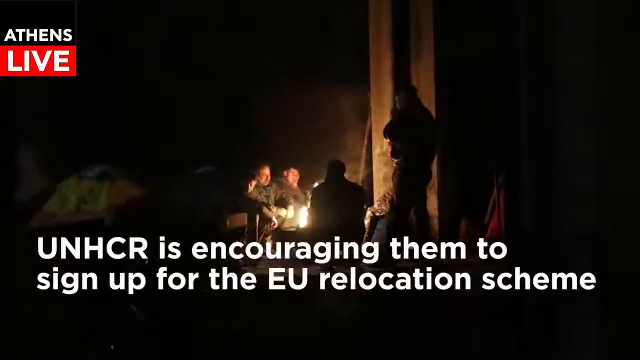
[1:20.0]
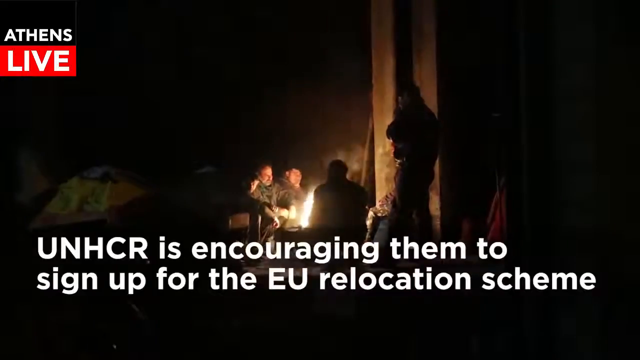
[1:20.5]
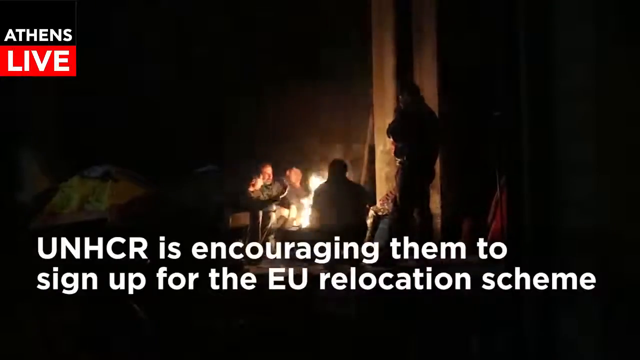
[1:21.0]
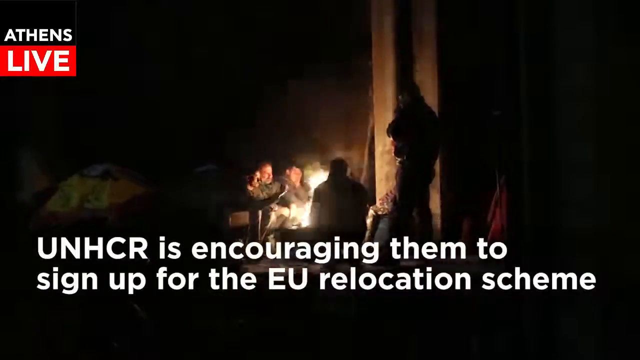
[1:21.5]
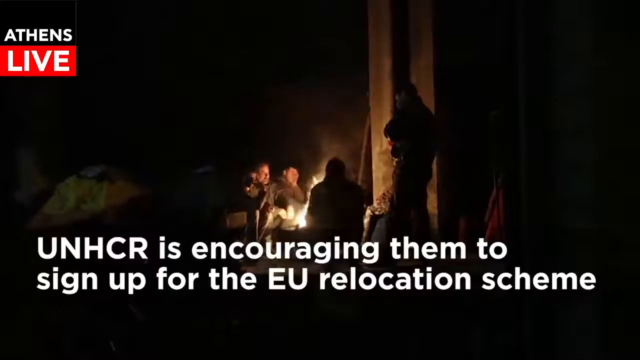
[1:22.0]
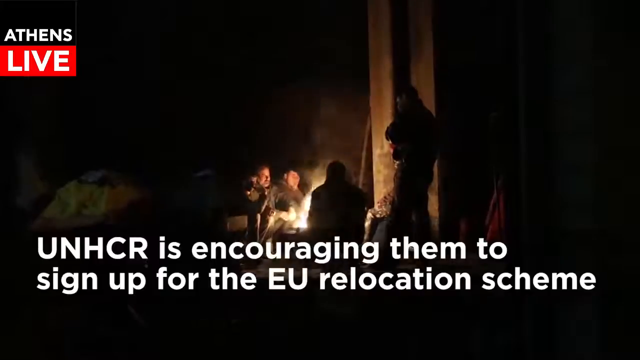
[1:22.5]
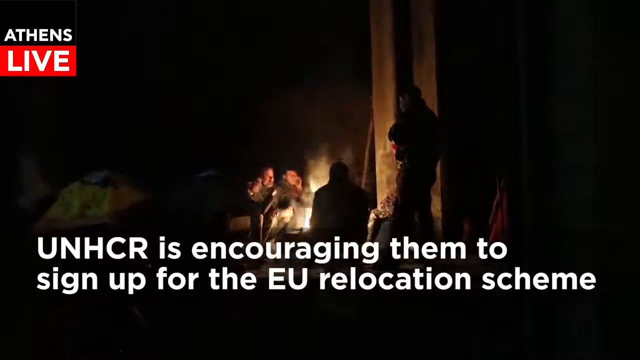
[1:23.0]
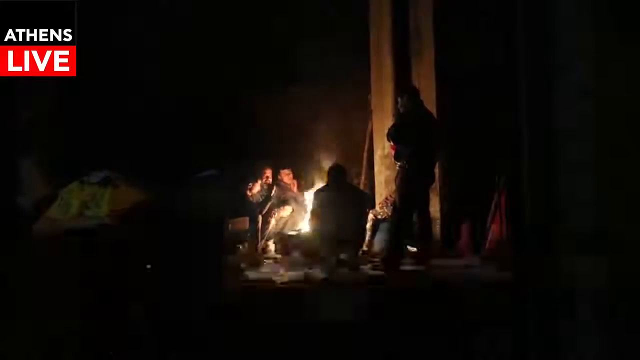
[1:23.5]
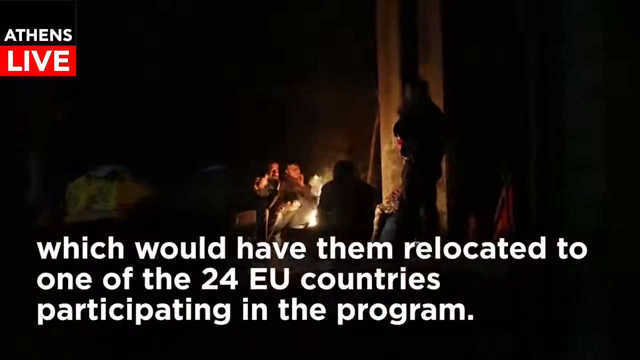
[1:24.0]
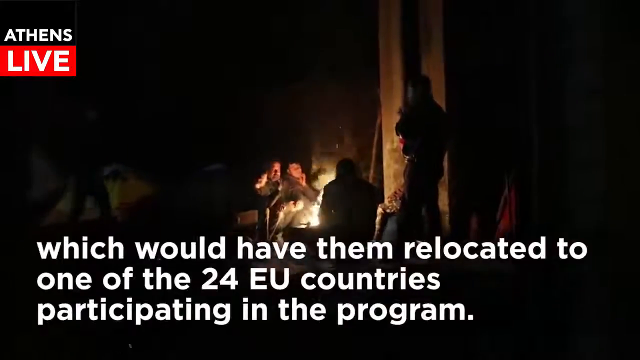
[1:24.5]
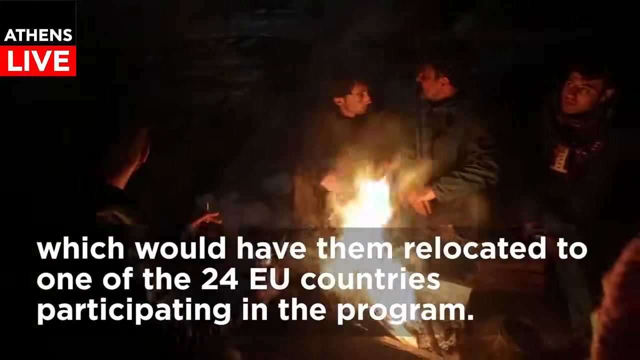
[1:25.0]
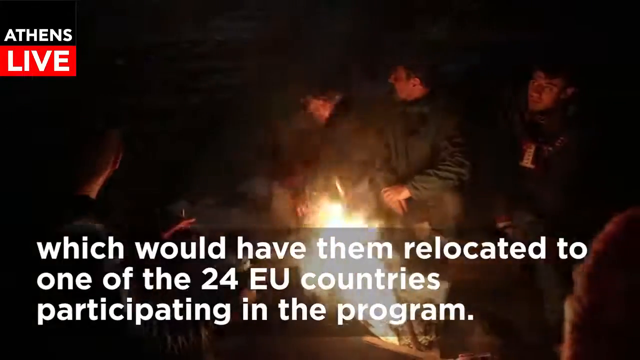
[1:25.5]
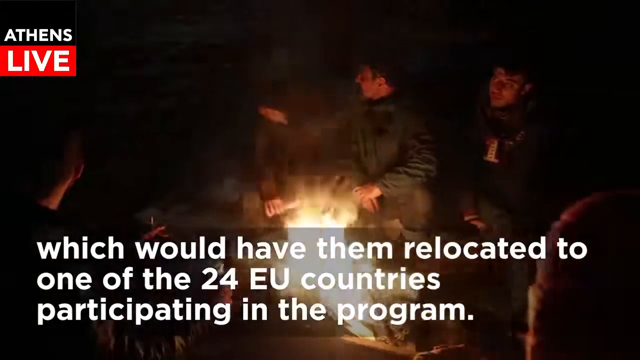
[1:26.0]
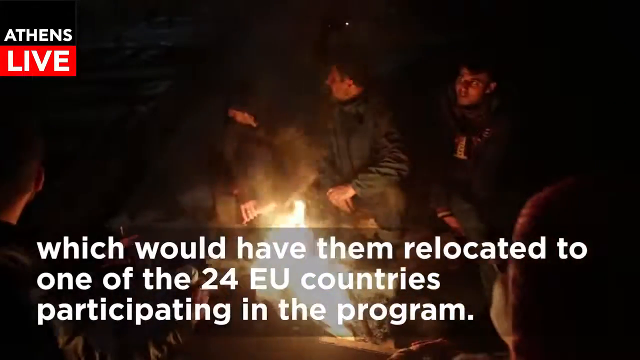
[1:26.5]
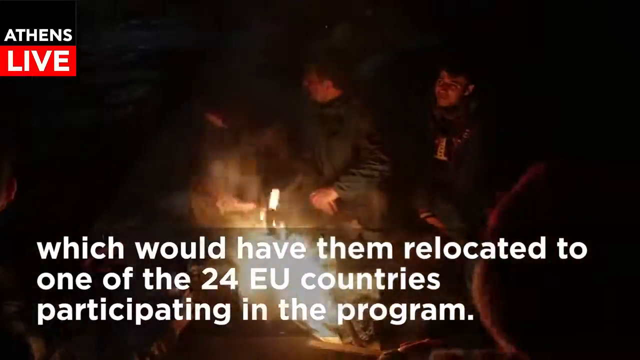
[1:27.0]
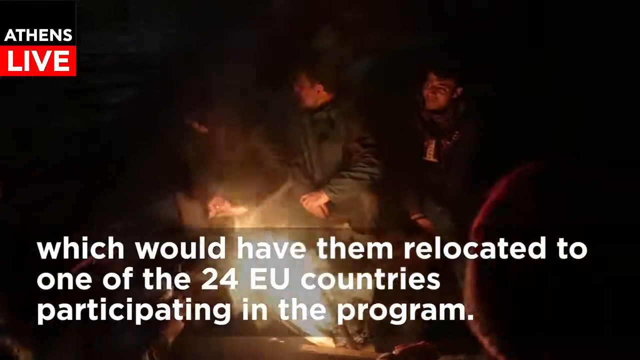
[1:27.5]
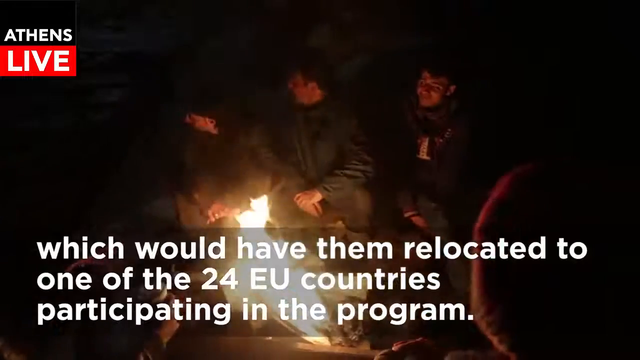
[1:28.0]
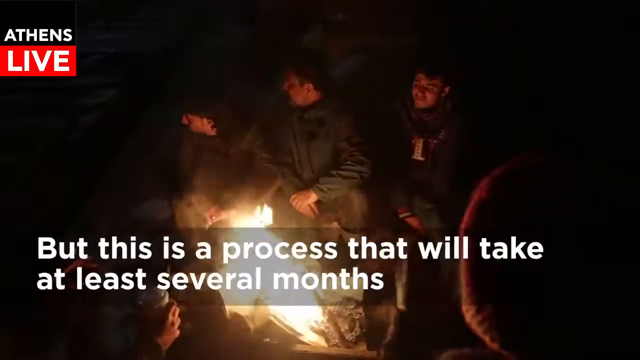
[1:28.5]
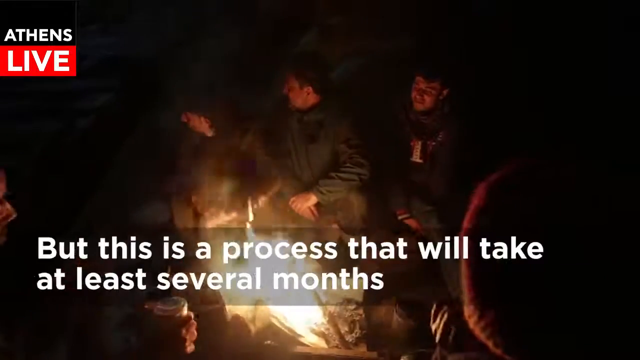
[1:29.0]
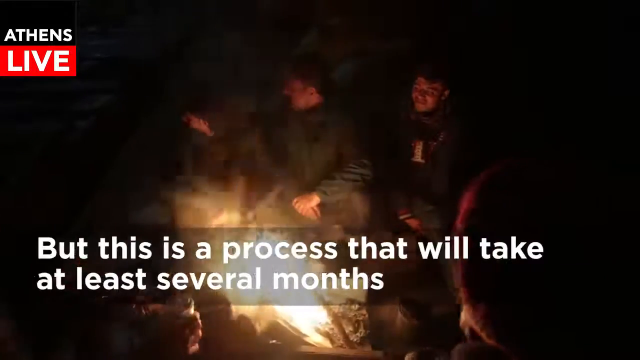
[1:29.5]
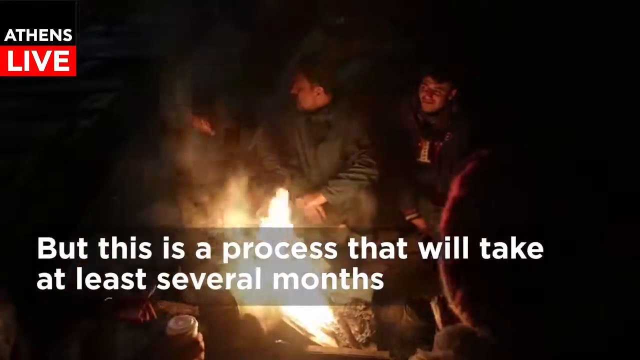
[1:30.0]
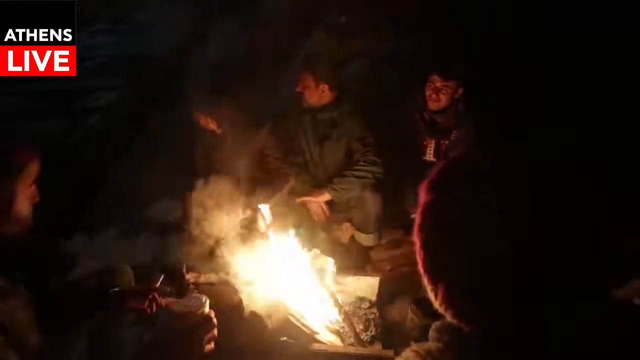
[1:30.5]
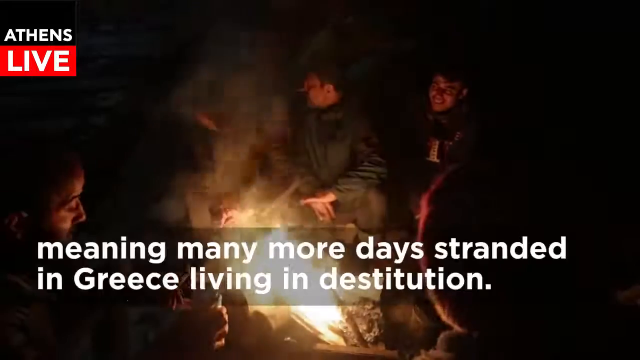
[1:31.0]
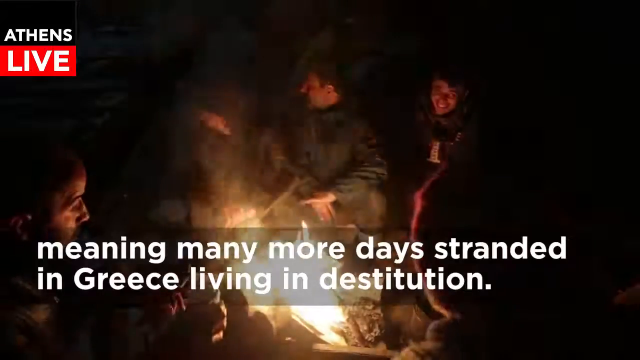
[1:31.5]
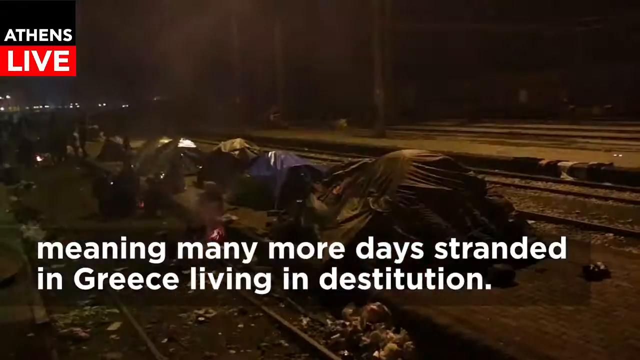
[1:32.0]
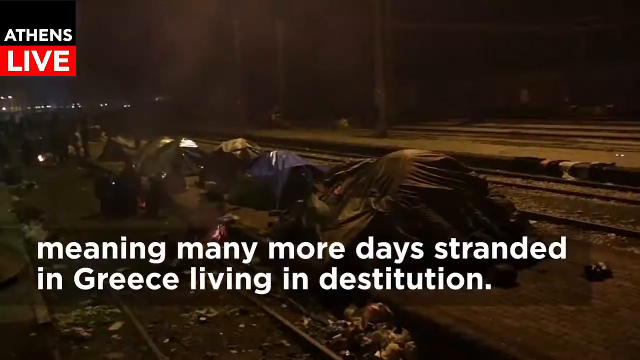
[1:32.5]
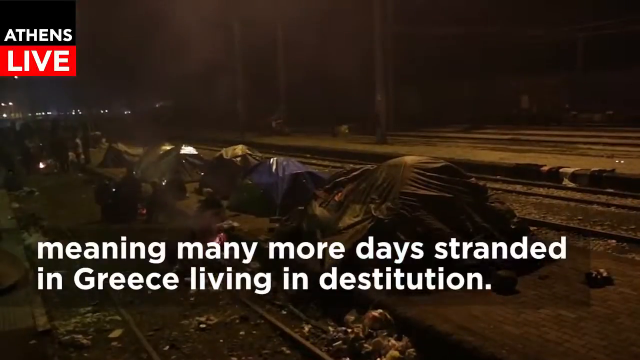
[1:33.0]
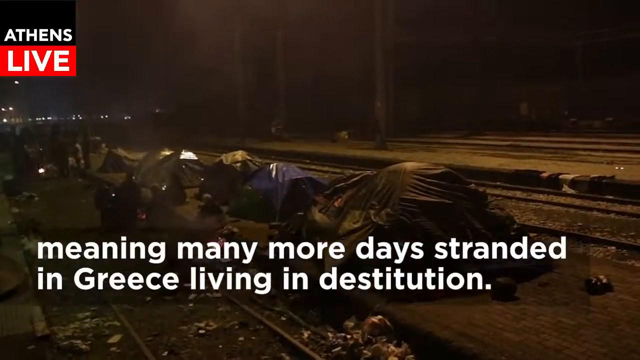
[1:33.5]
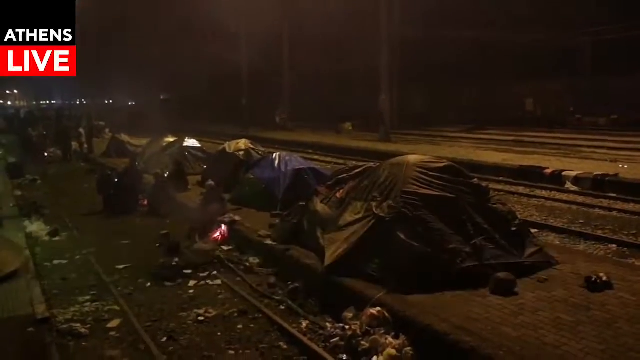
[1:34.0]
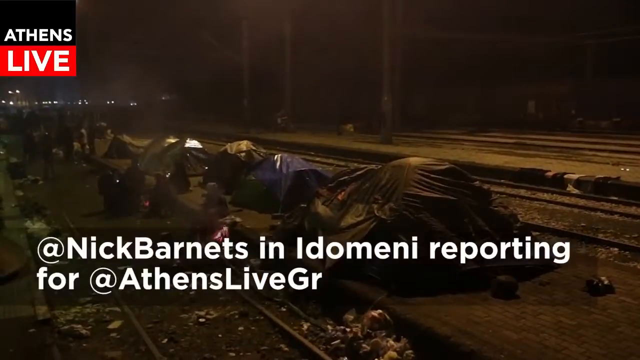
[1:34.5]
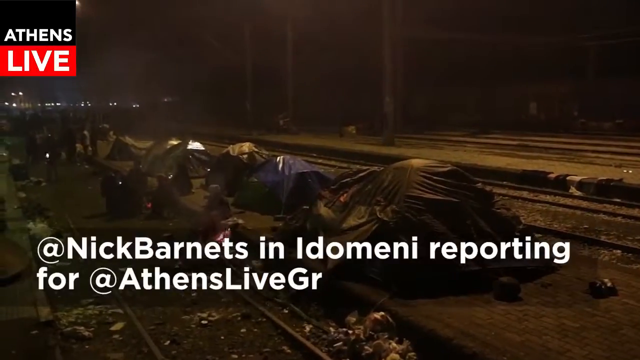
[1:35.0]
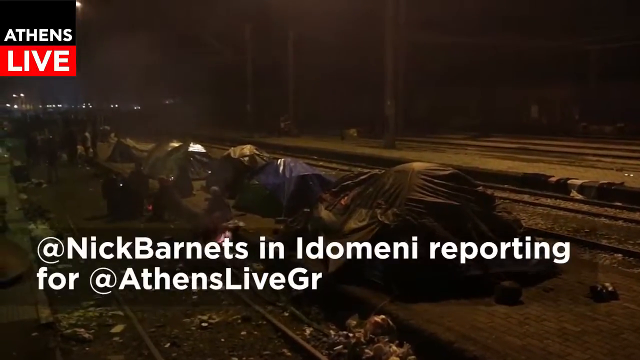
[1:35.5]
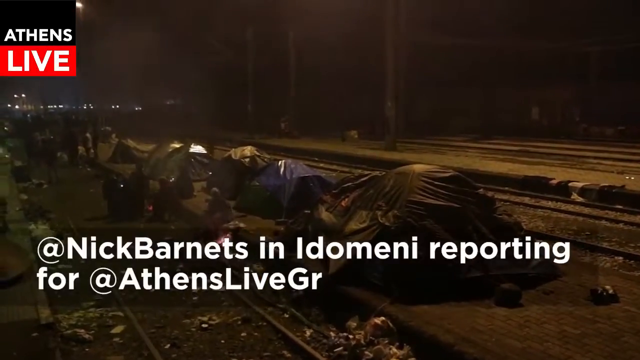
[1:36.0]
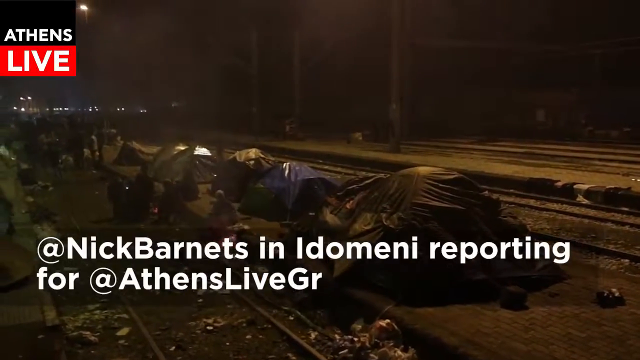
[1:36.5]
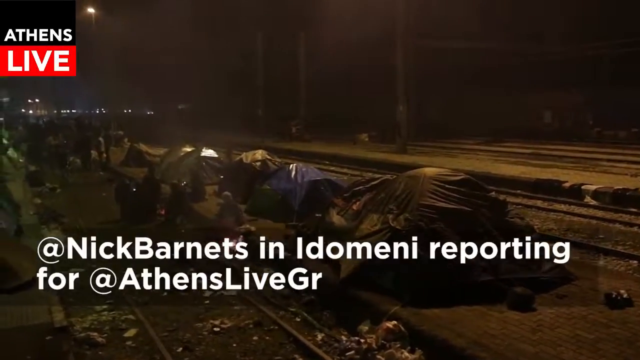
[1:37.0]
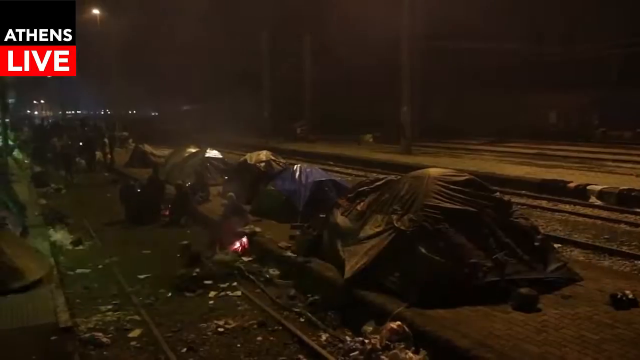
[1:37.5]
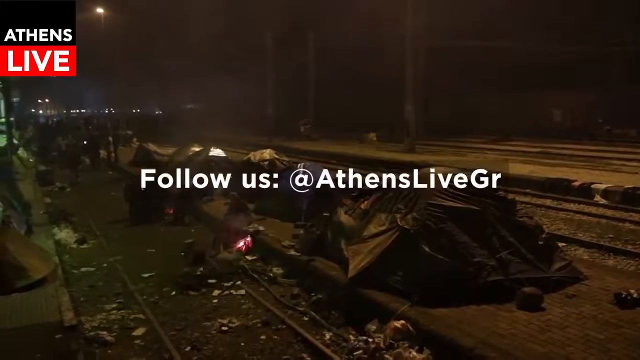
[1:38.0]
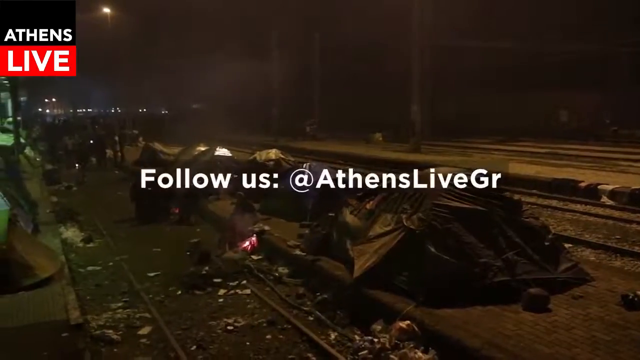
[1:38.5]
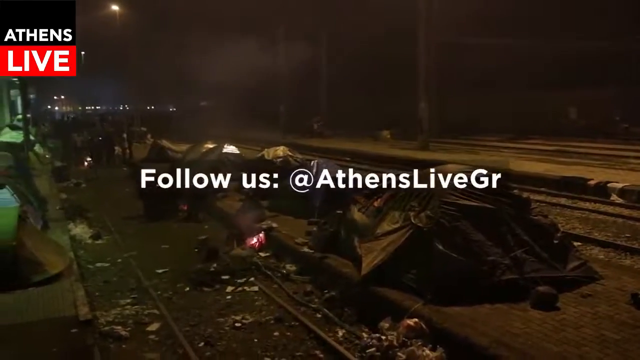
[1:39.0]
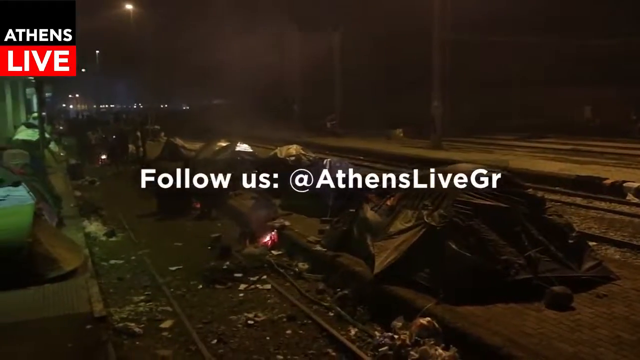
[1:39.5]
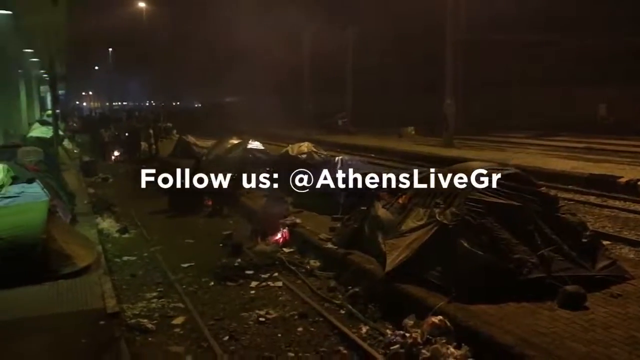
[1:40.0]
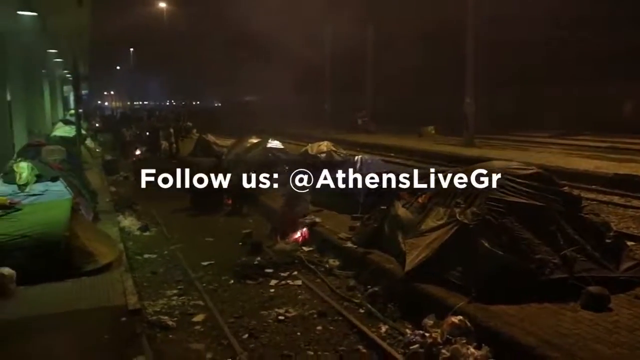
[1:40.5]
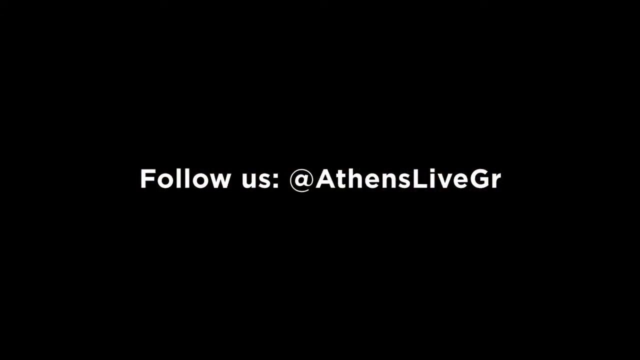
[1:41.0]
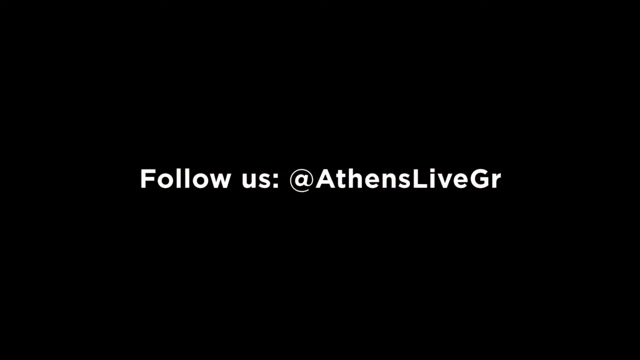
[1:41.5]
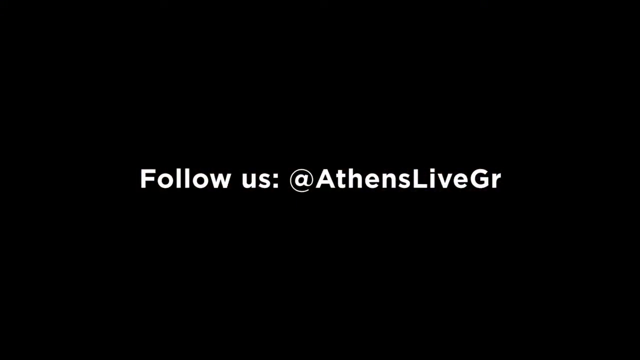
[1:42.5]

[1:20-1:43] Different views, angles and perspectives continue to show the area of refugees and their living conditions. Mainly, some of them are around a fire, talking with one another. People have their tents set up on some train tracks. A caption reads: "the UNHCR is encouraging them to sign up for the EU relocation scheme which would have them relocated to one of the 24 EU countries participating in the program, but this is a process that will take at least several months". As the video comes to an end, it shows some social media handles to follow.